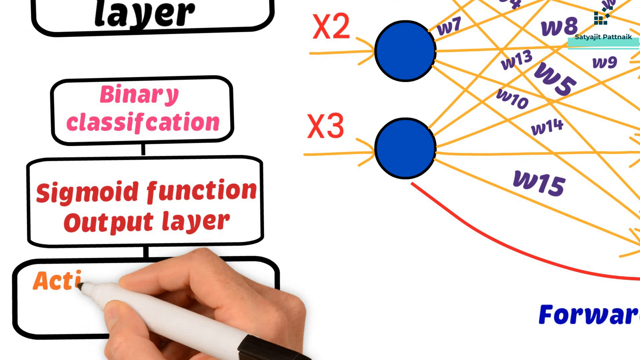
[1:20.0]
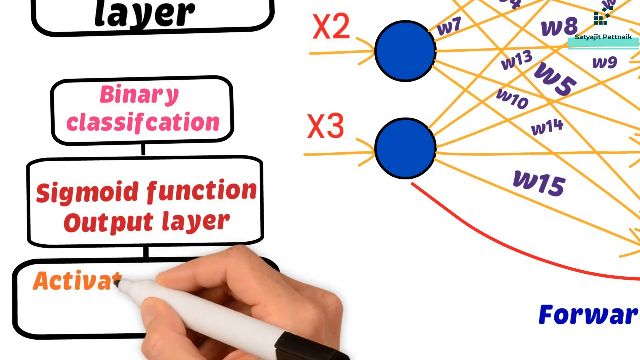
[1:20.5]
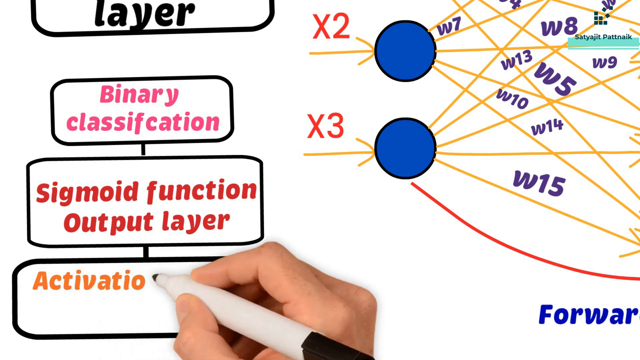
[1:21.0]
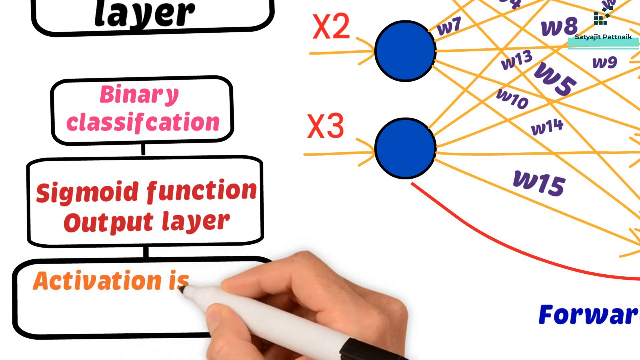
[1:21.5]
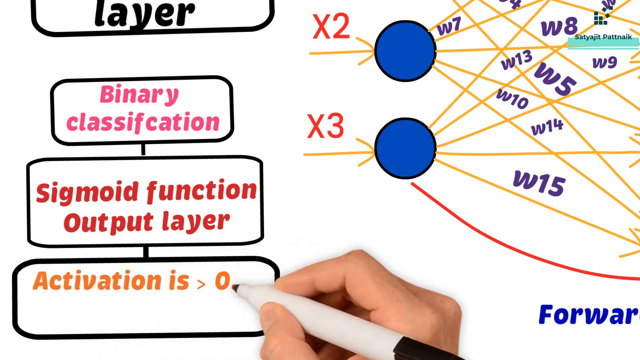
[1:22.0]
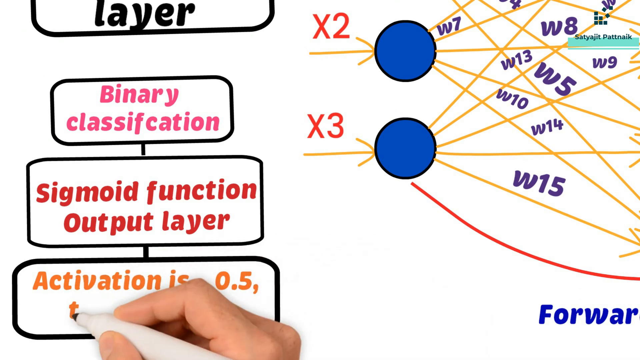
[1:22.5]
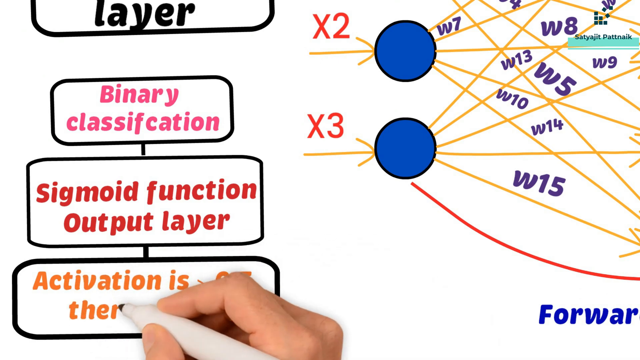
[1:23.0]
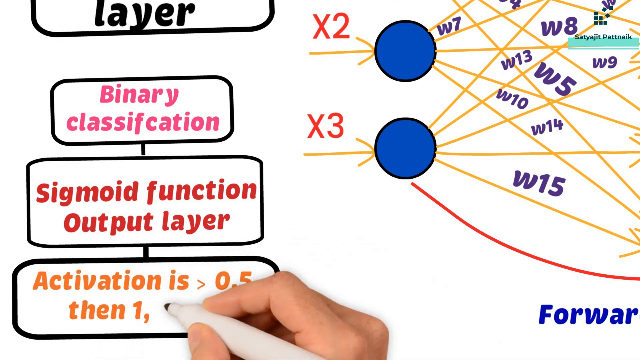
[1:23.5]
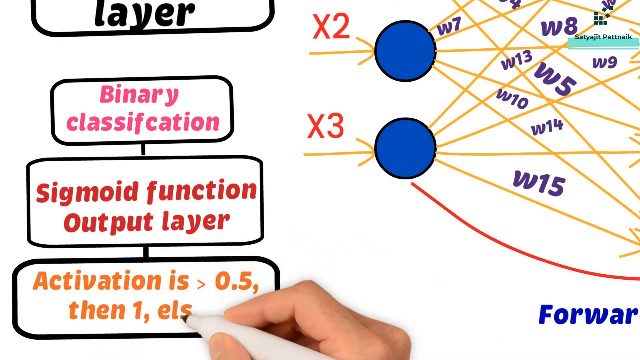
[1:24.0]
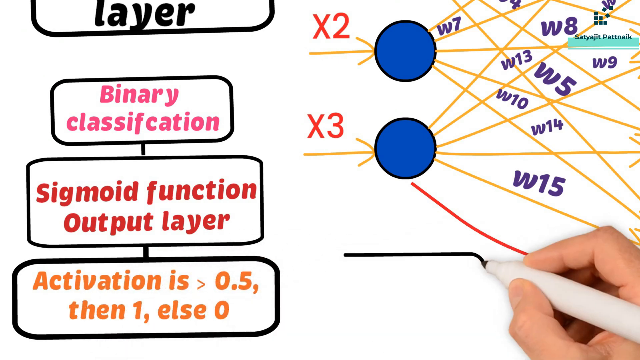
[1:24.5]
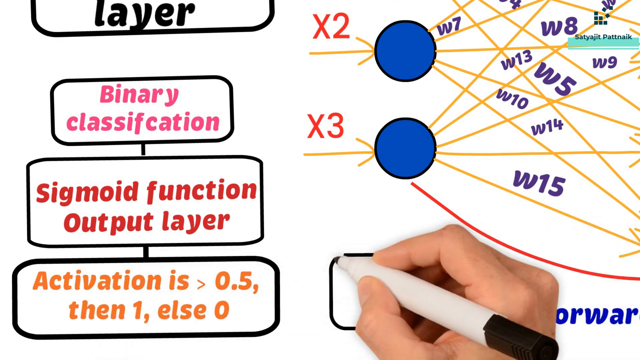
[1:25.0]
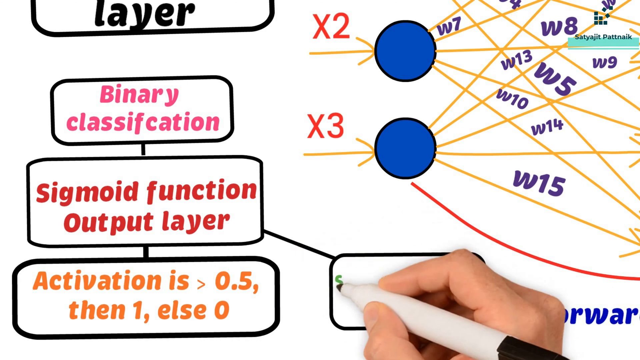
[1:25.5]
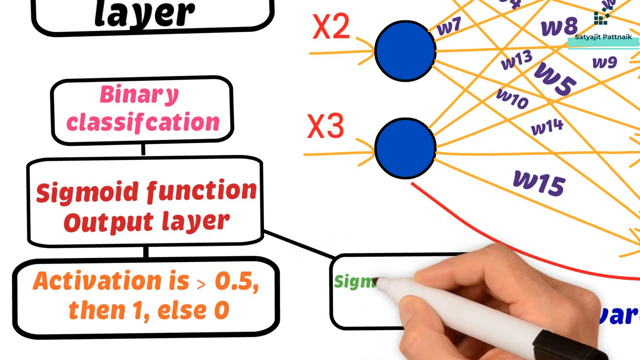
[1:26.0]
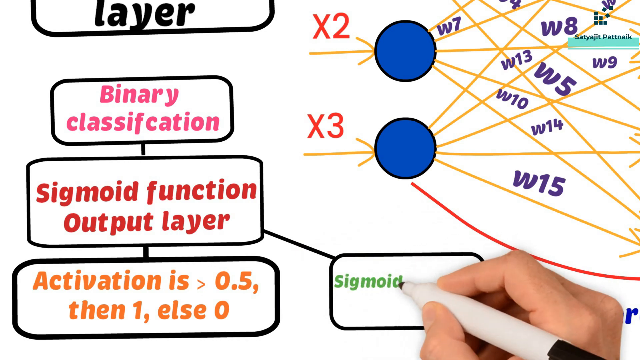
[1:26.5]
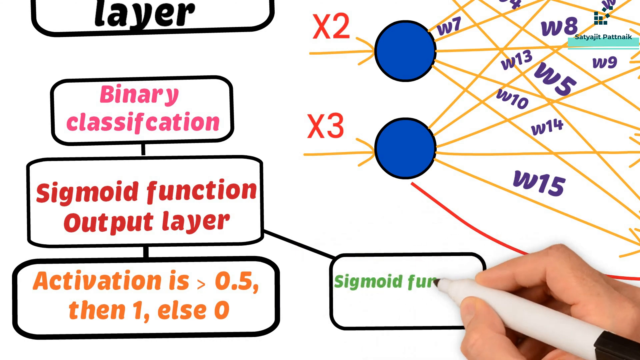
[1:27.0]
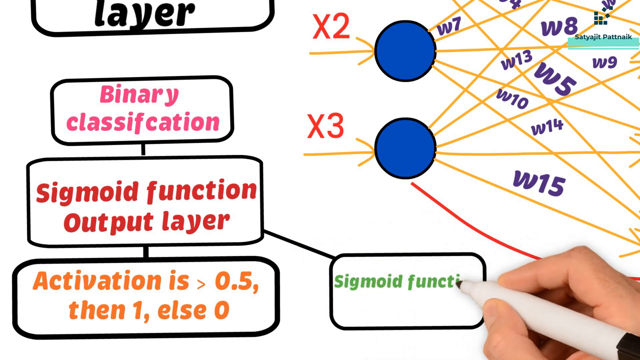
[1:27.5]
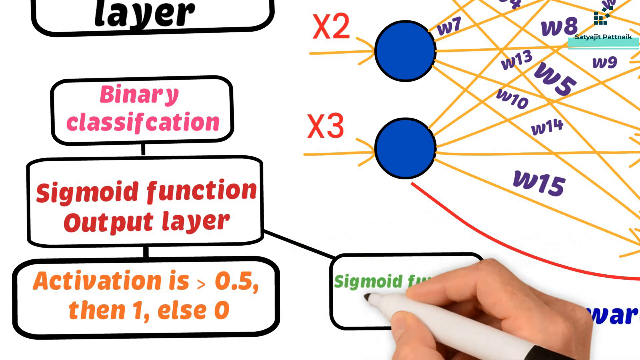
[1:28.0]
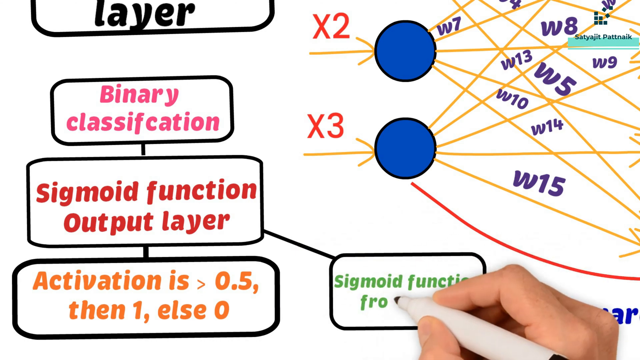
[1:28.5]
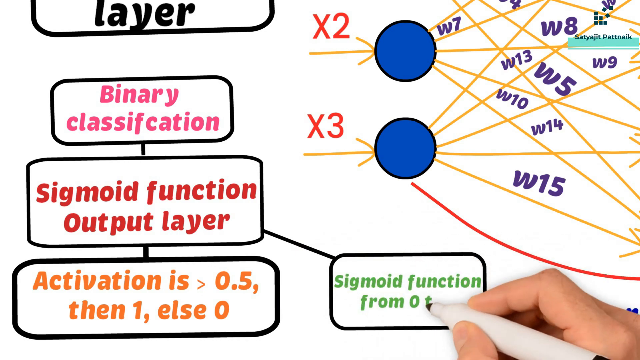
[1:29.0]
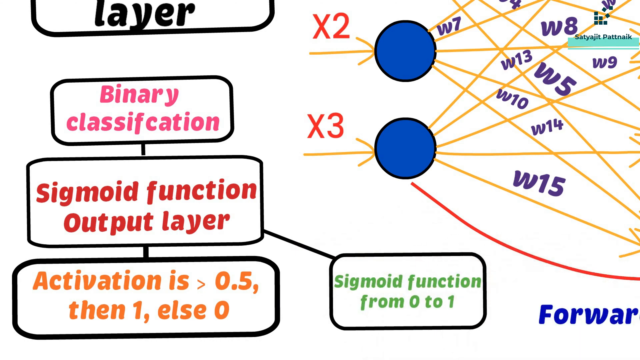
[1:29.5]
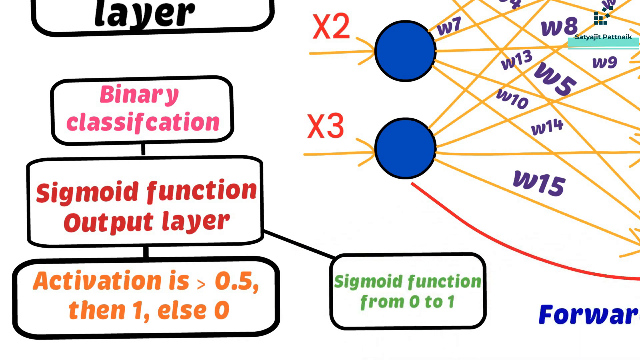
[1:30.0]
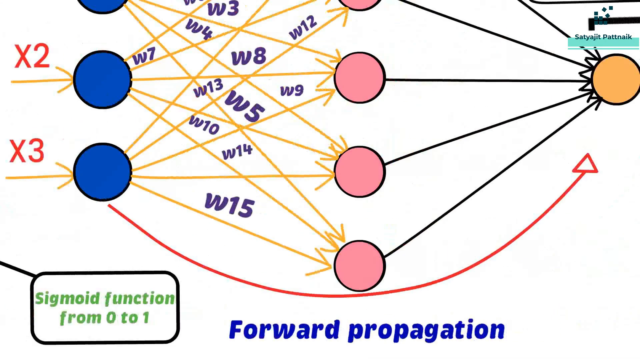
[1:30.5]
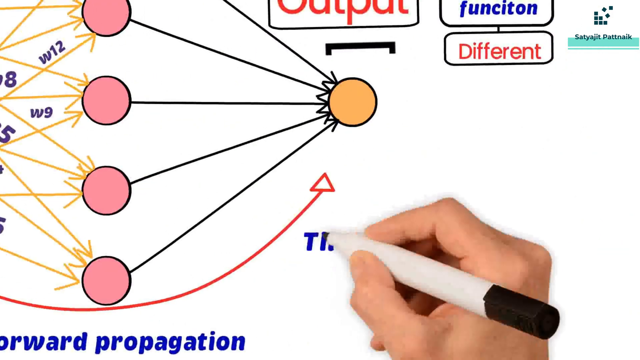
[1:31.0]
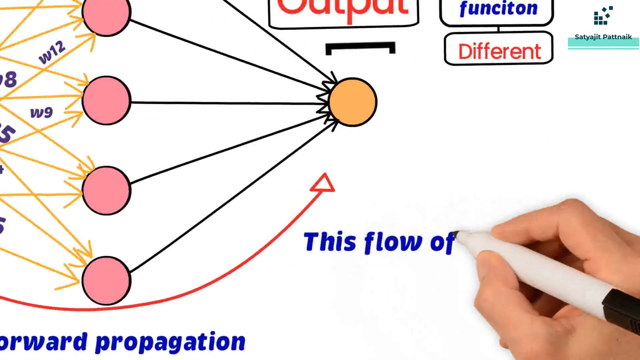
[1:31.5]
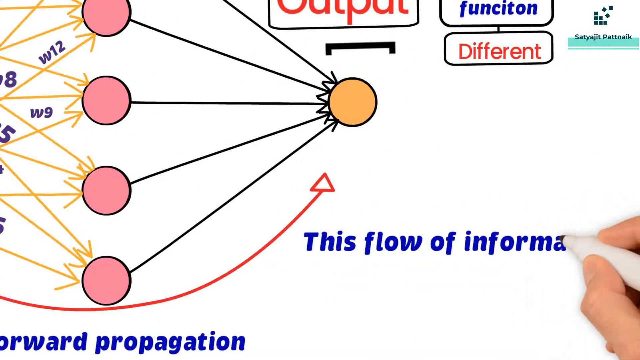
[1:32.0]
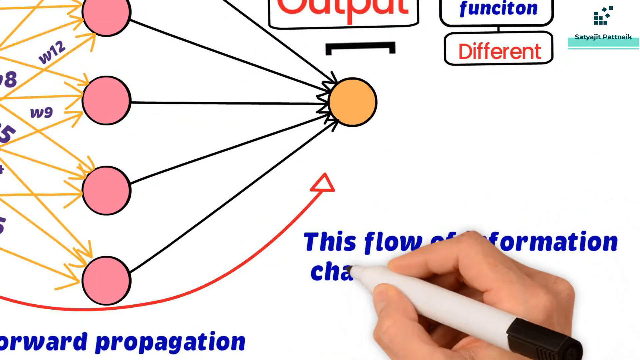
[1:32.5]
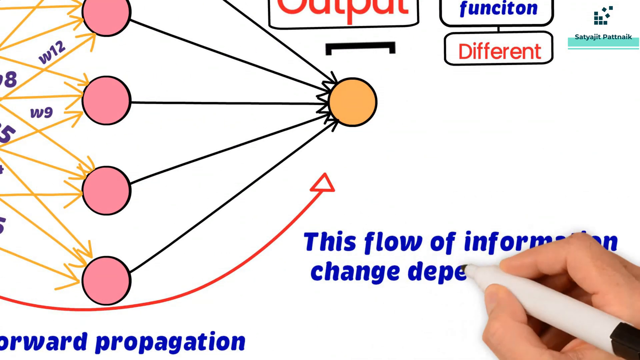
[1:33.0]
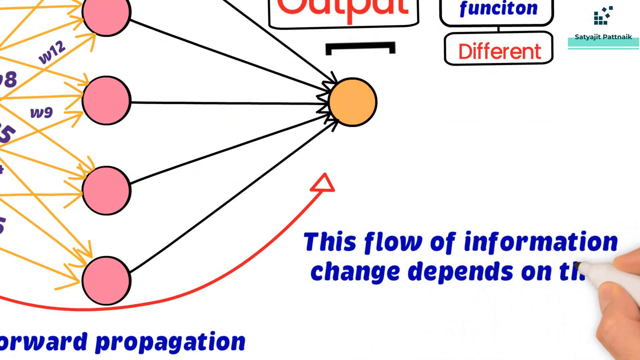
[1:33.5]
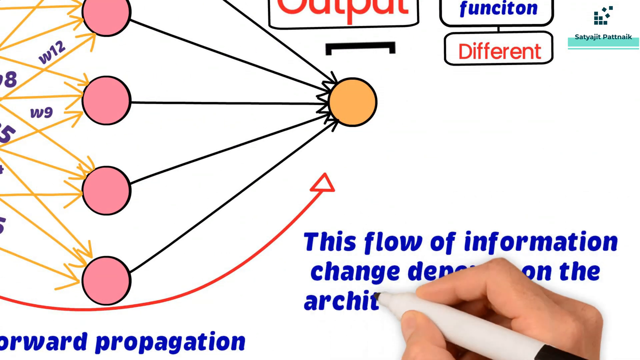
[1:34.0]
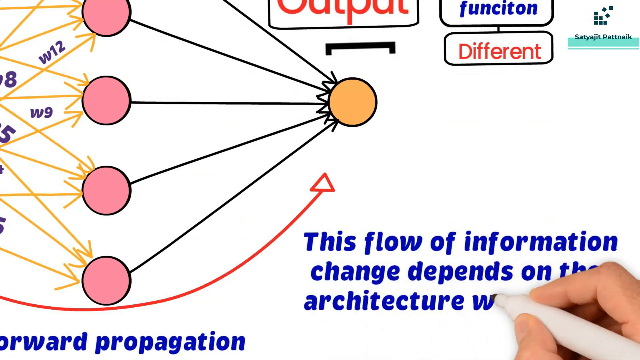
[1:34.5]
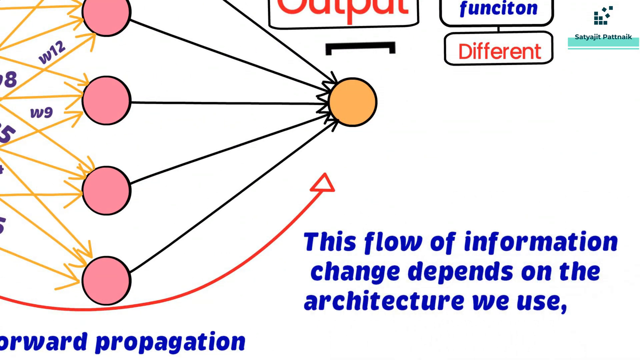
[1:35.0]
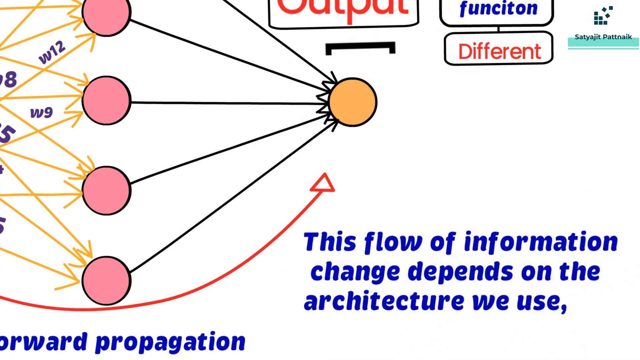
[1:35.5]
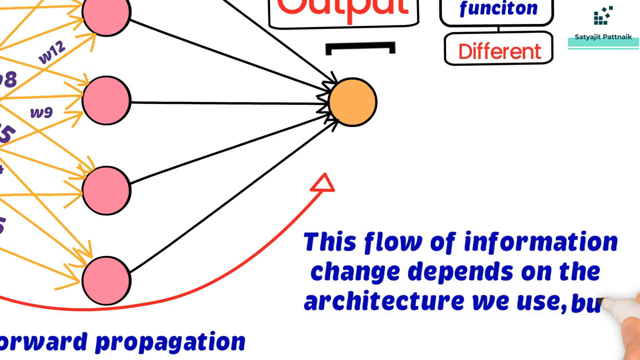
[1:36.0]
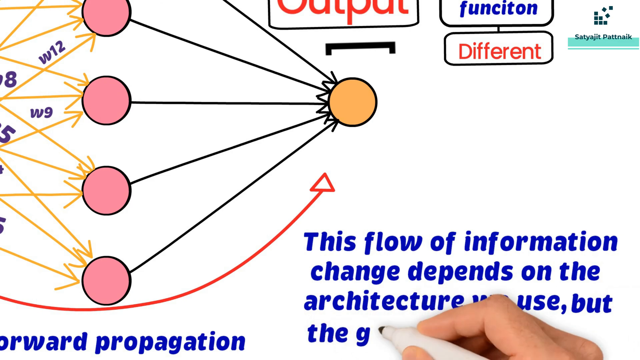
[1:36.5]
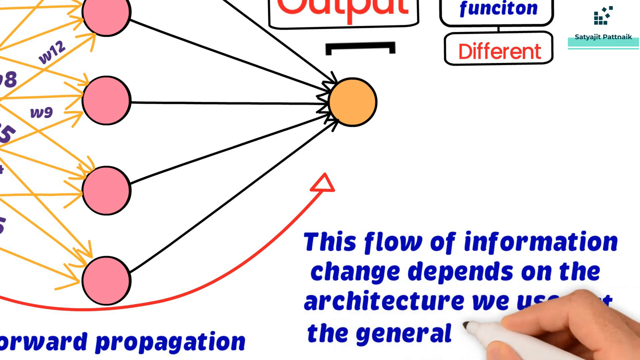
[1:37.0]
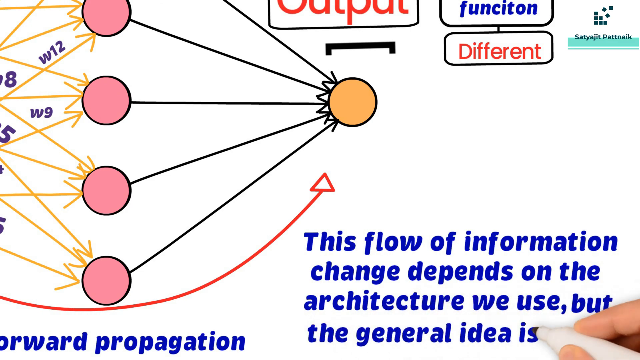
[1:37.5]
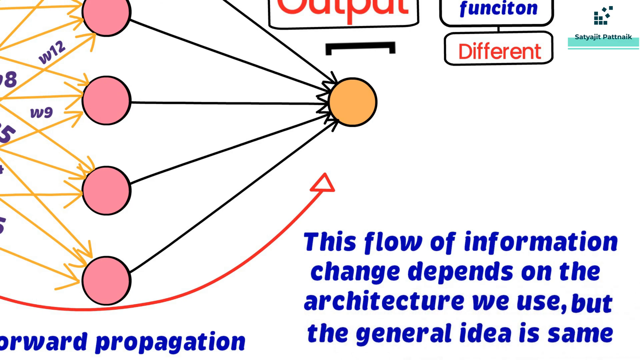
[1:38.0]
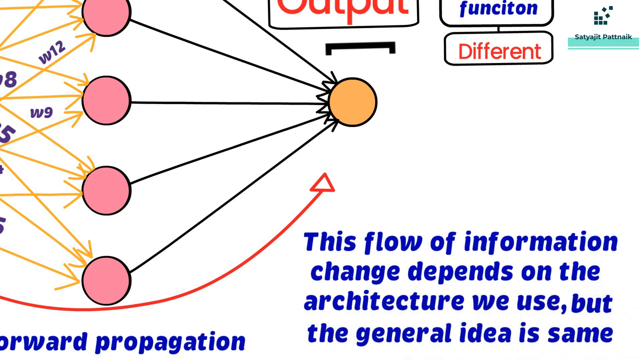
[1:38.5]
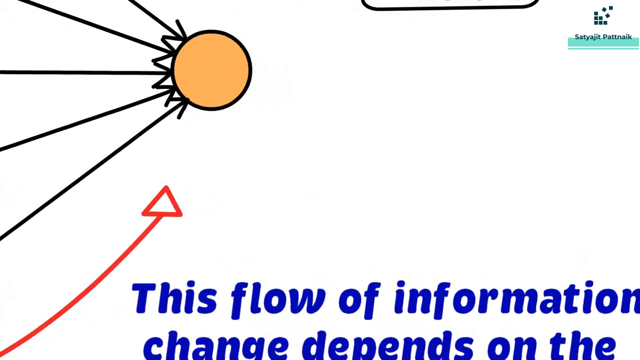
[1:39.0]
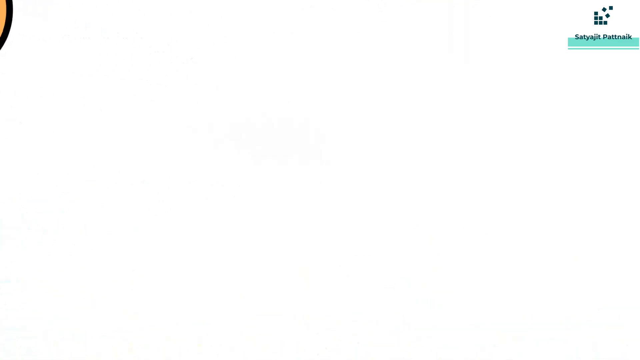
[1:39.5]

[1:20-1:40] Much more information has been added. On the arrows between the crosses are many Ws, numbered from 1 to 15, and further segments and boxes are added. The video zooms in on the lower left to follow the fast-writing AI hand, zooms out to the whole picture for a short moment, and then quickly moves to the bottom right to show what is being written there.